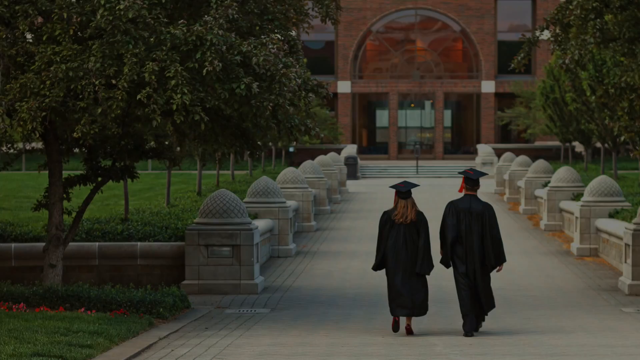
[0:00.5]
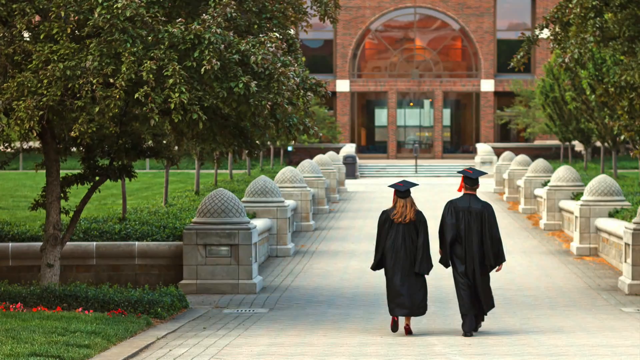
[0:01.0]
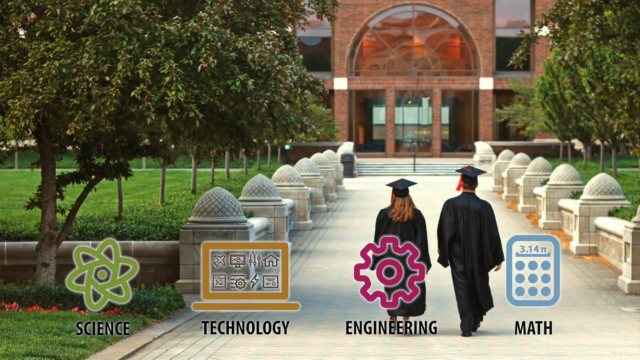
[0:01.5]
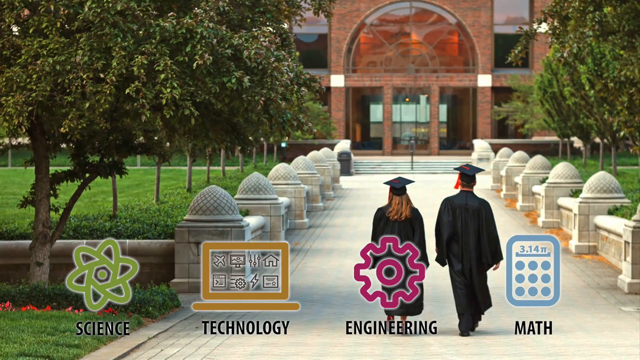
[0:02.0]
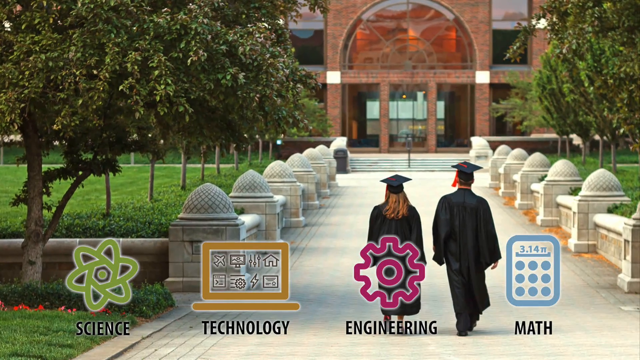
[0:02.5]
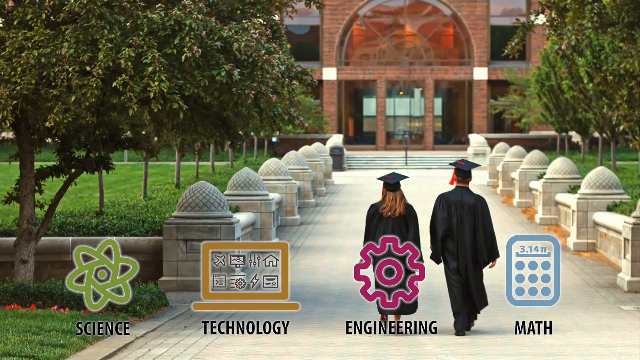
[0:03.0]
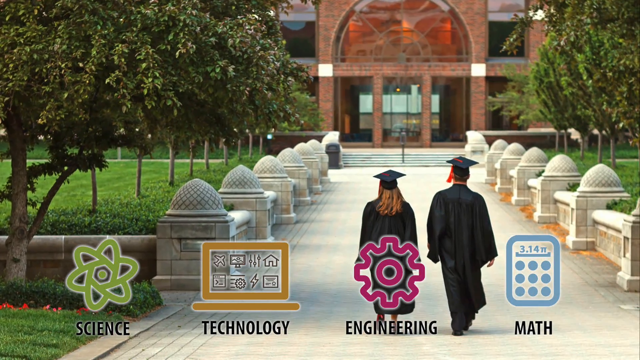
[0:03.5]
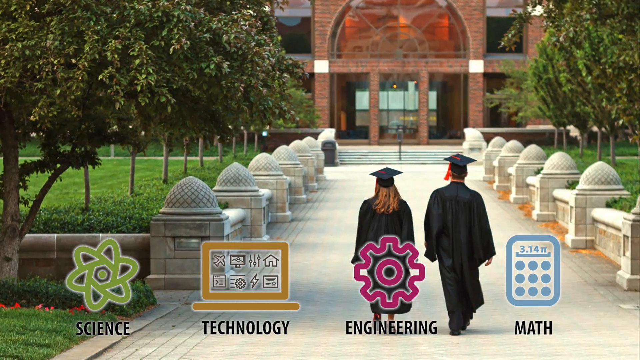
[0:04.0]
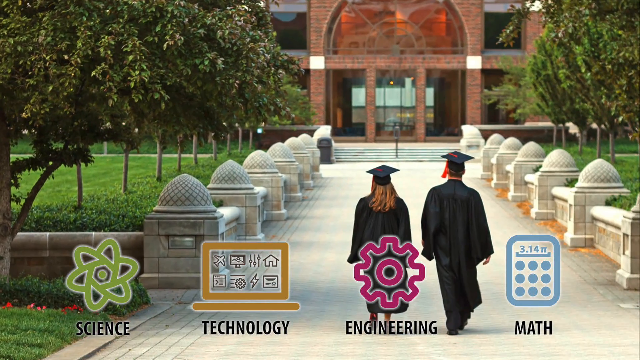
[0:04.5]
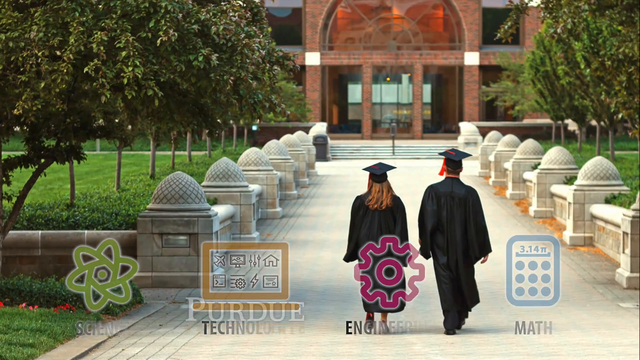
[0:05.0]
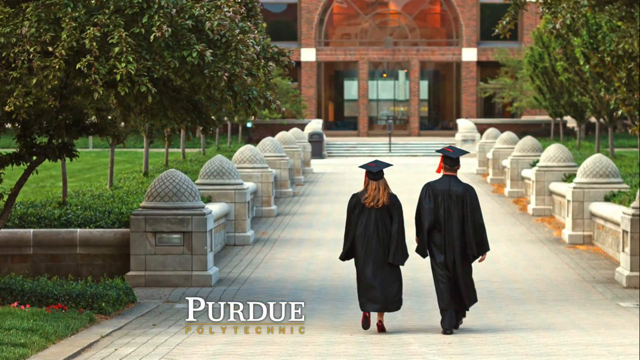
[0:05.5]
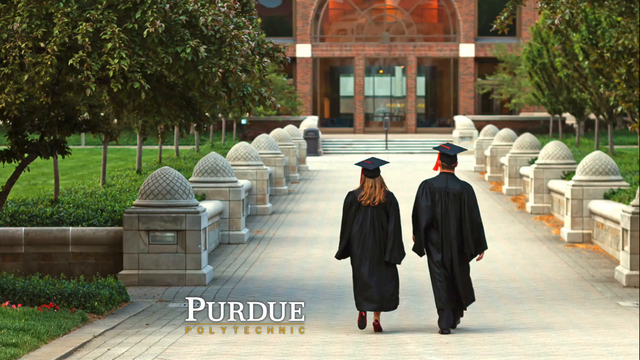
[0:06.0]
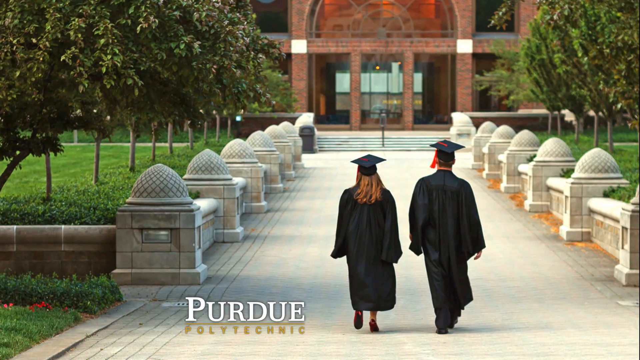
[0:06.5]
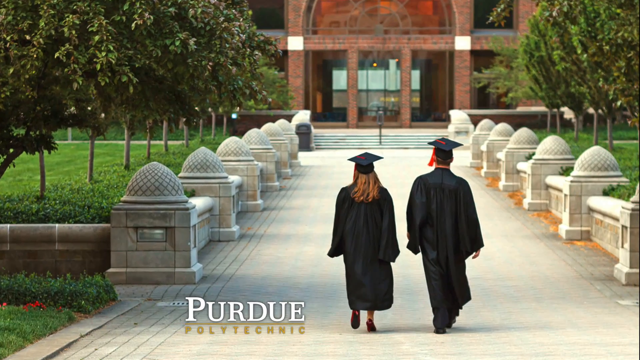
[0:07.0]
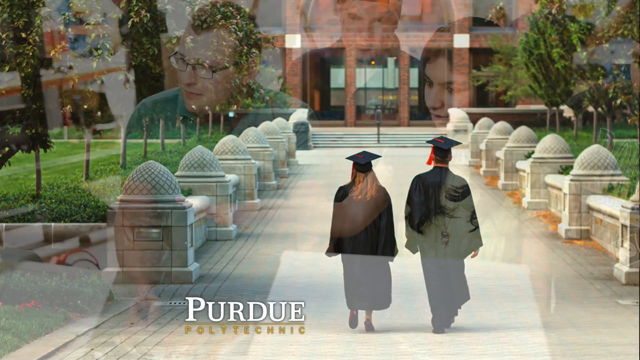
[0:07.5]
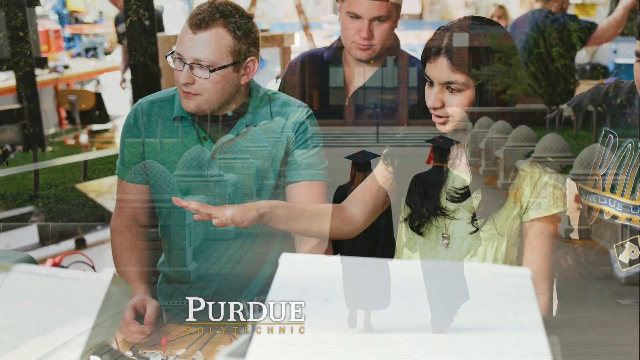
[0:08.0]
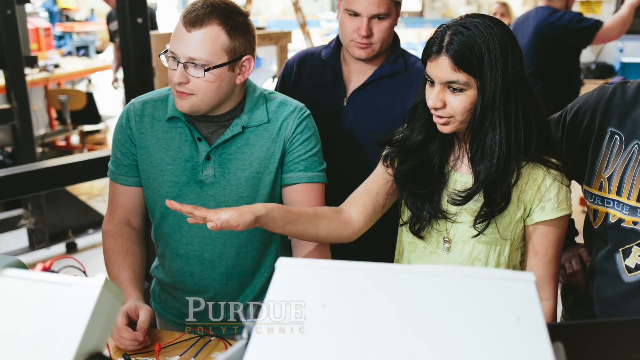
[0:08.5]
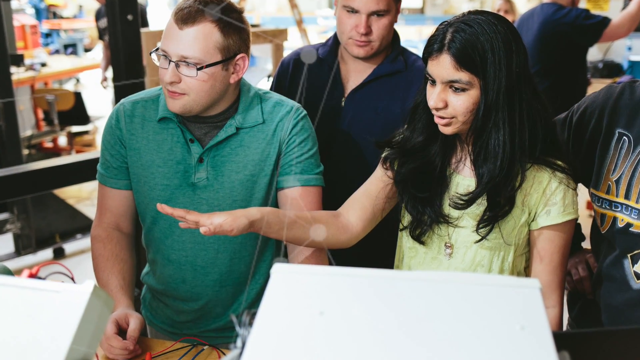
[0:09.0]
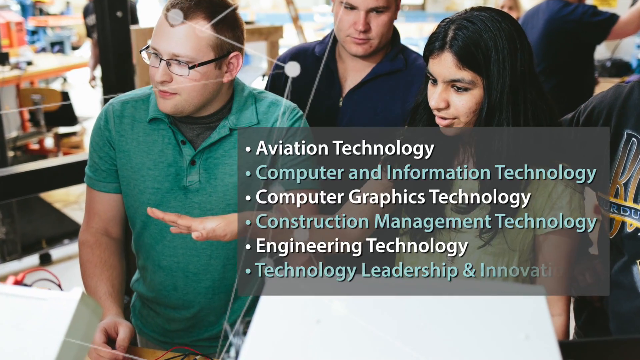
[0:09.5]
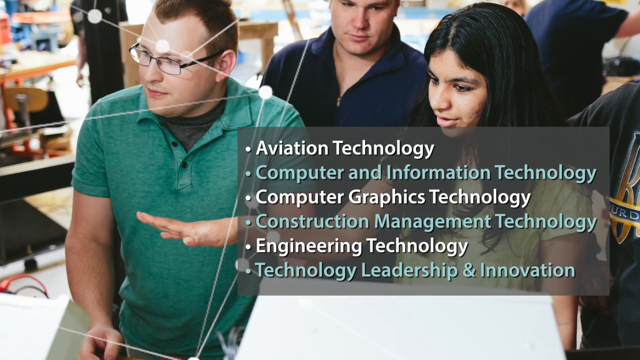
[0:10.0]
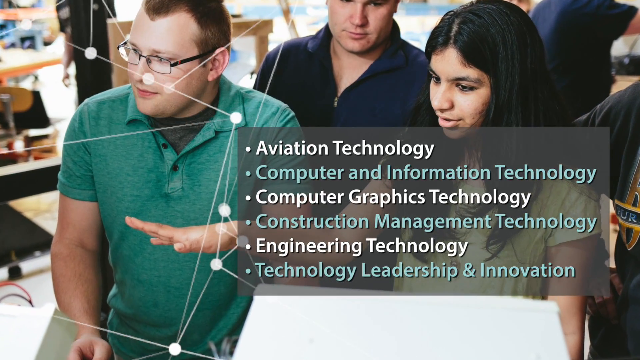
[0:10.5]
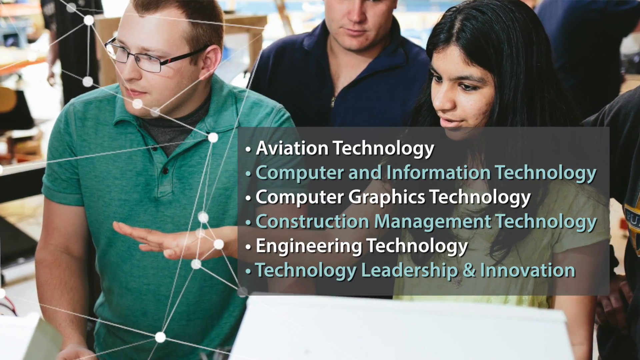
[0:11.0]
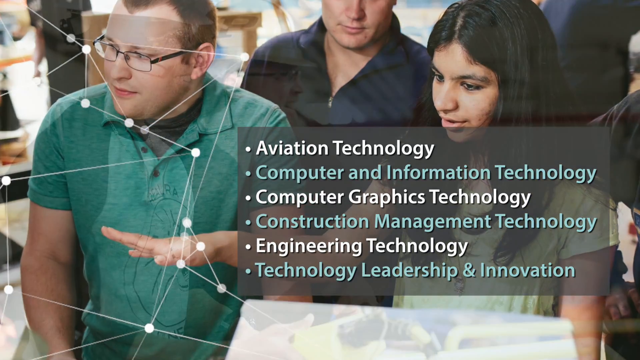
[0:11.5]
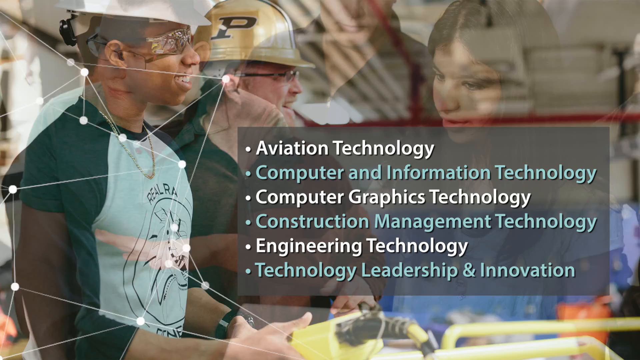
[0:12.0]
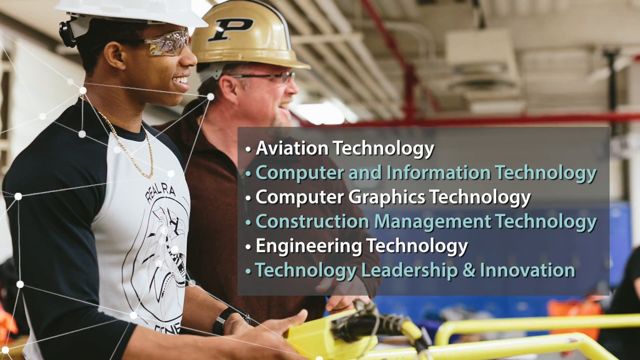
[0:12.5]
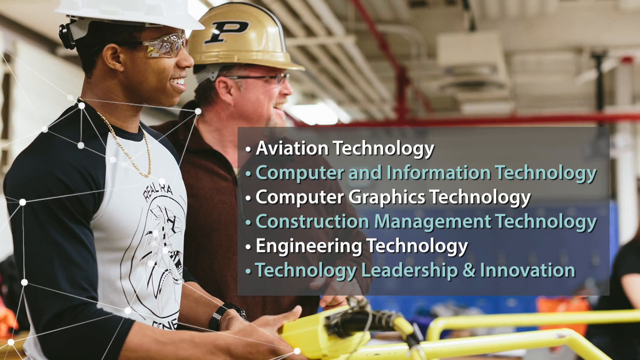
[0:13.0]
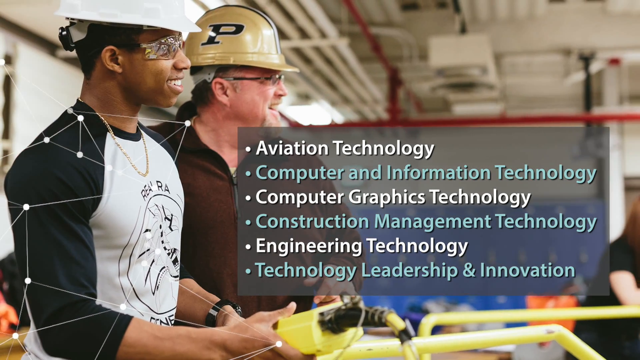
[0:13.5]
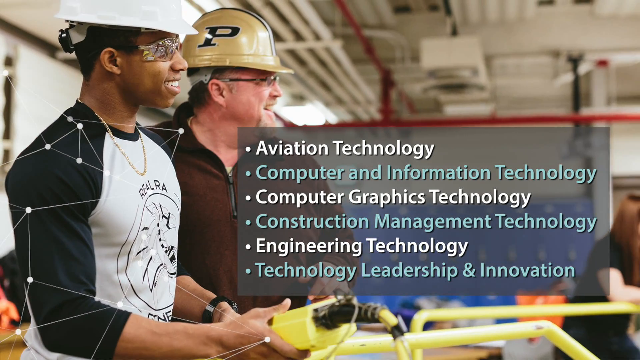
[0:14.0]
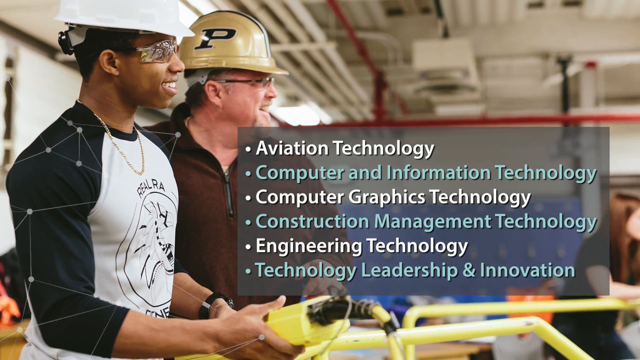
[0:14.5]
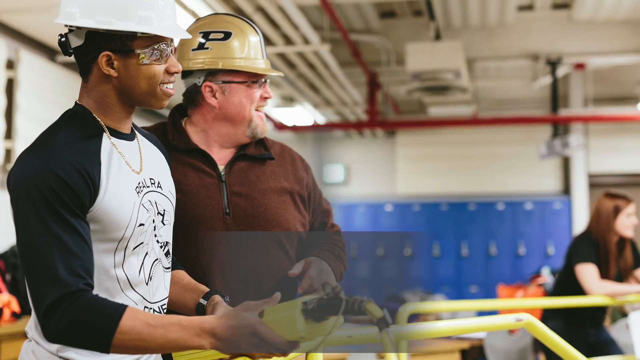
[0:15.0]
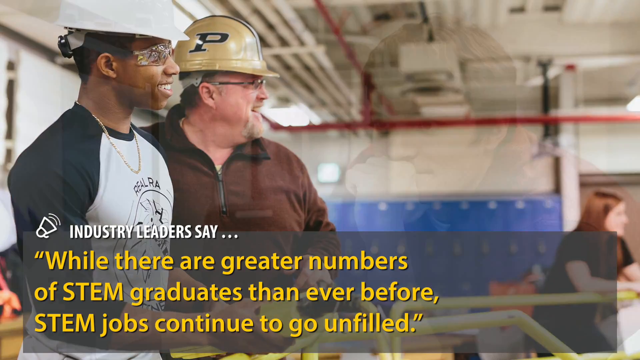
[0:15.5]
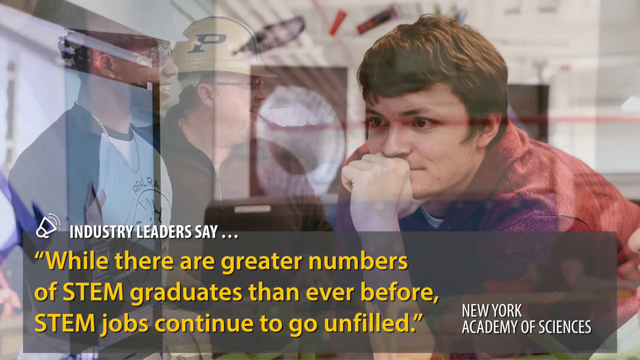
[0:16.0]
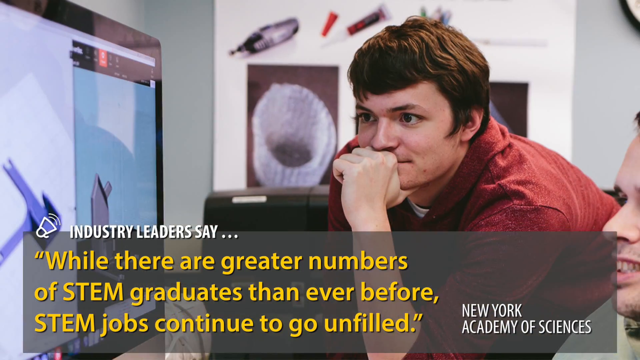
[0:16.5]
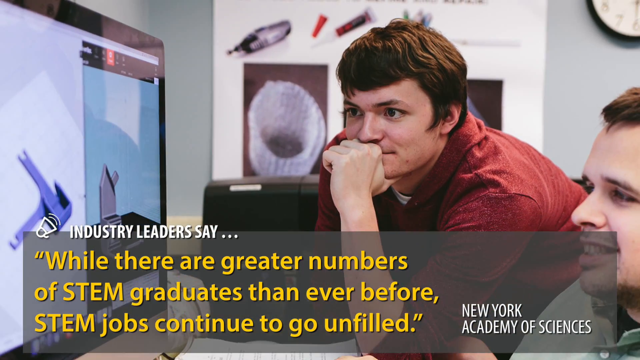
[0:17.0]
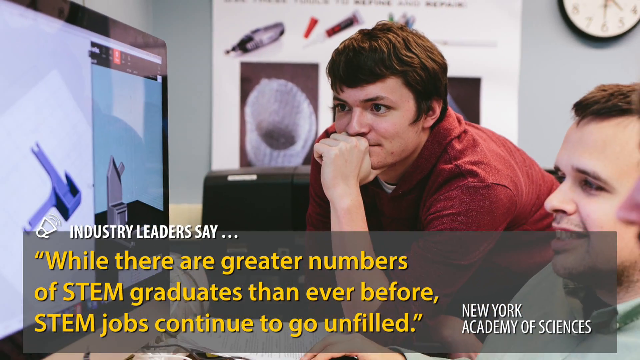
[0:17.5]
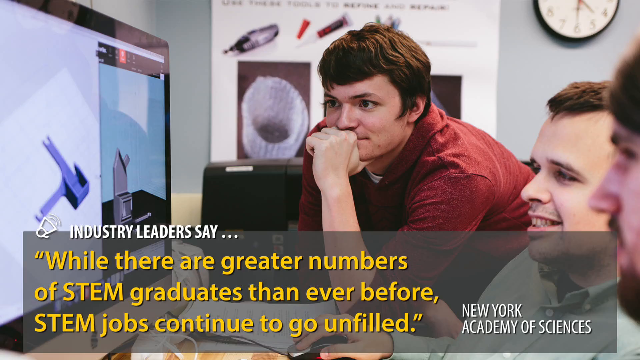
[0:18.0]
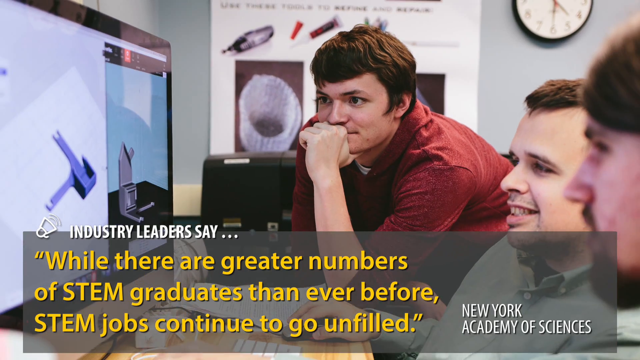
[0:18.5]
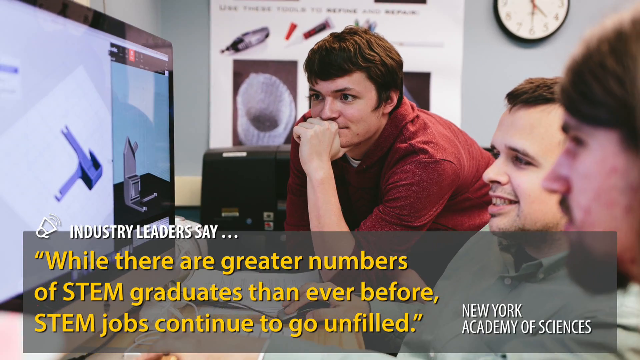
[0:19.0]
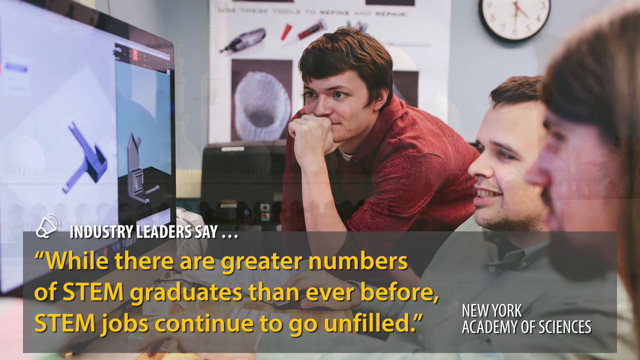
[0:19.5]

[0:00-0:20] The video opens on a photo of two students who have apparently graduated, since they wear special togas and special hats, and they seem to be going to a university. They are on a road with decorations on the right and left sides, and on both sides there is green grass and trees in a straight row. Four icons appear: first science, second technology, third engineering and fourth math. After that the icon of Purdue Polytechnic appears. A second photo shows three people, one woman and two men; the woman is talking to the men about something unclear. A list of fields appears: aviation technology, computer and information technology, computer graphics technology, construction management technology, engineering technology, and technology, leadership, and innovation. Text reads "Industry leaders say while there are greater numbers of STEM graduates than ever before, STEM jobs continue to go unfilled," along with New York Academy of Science.